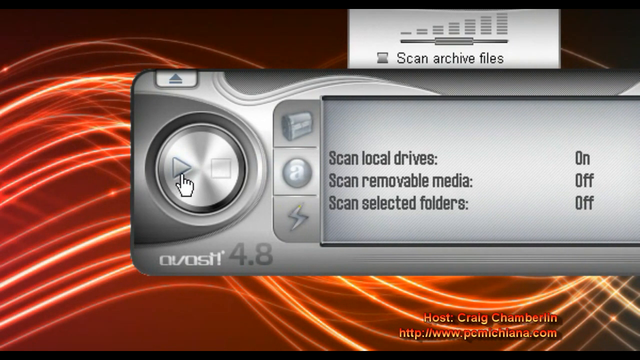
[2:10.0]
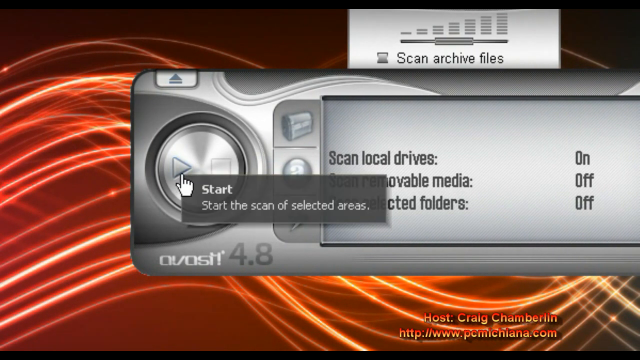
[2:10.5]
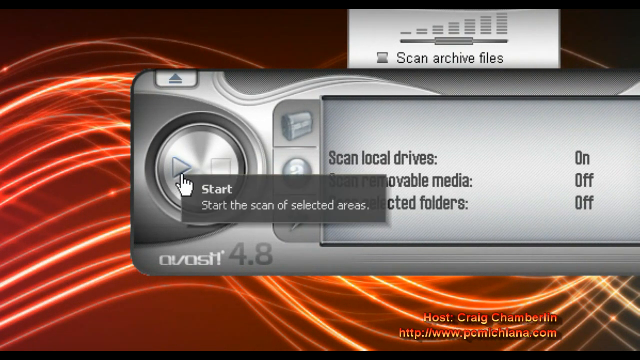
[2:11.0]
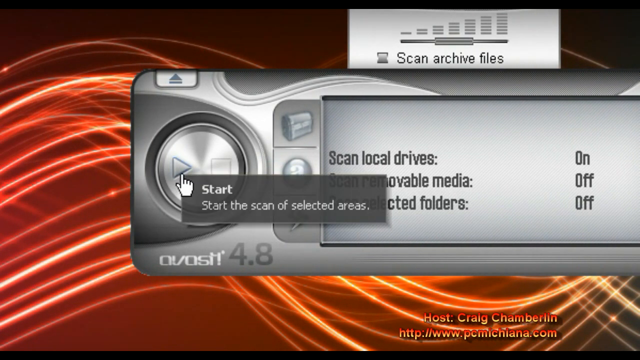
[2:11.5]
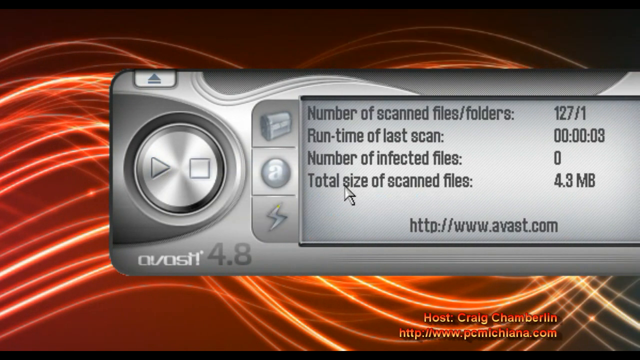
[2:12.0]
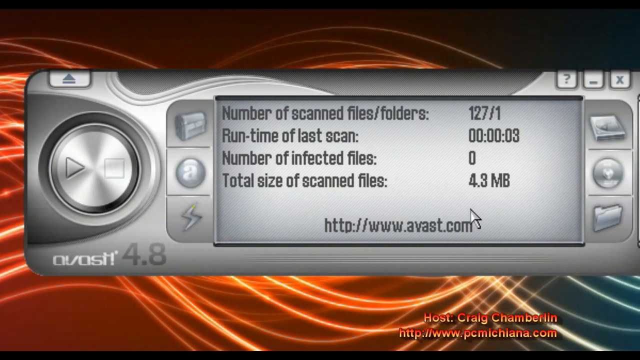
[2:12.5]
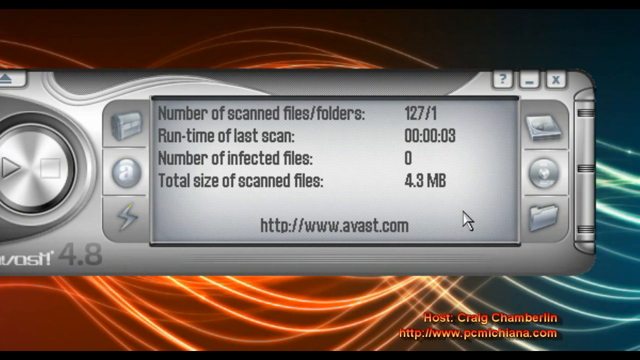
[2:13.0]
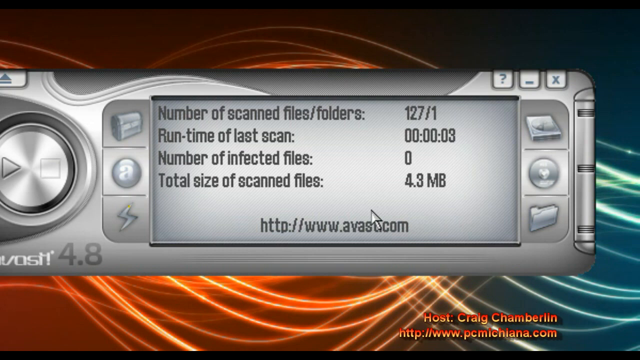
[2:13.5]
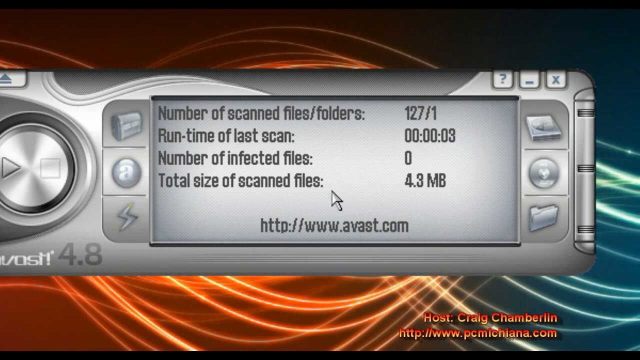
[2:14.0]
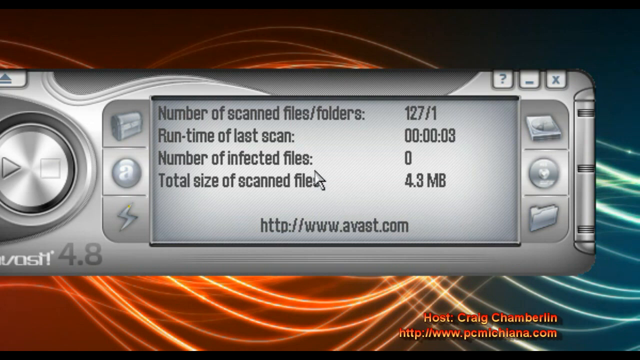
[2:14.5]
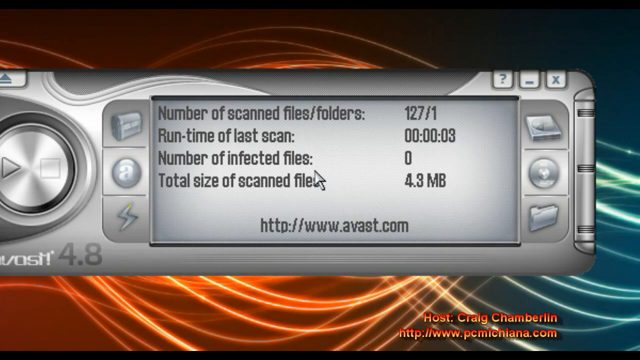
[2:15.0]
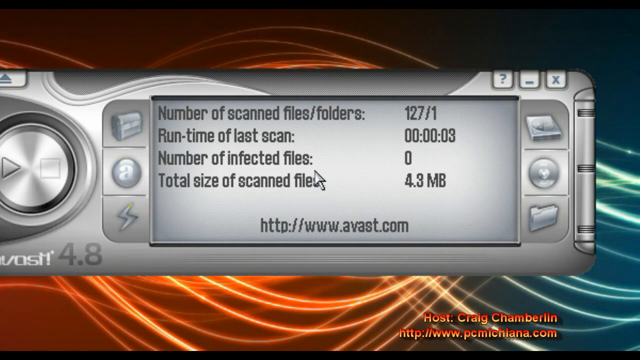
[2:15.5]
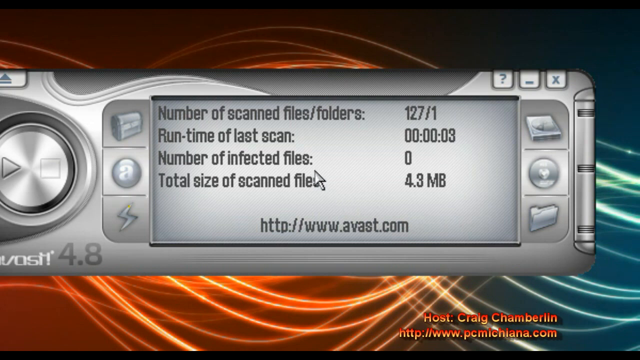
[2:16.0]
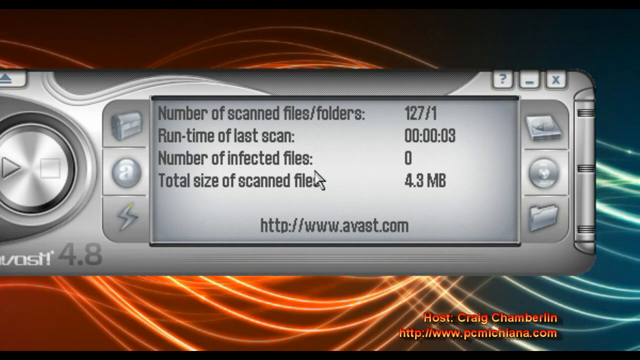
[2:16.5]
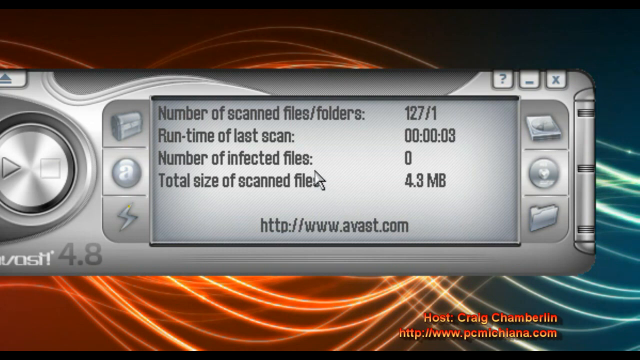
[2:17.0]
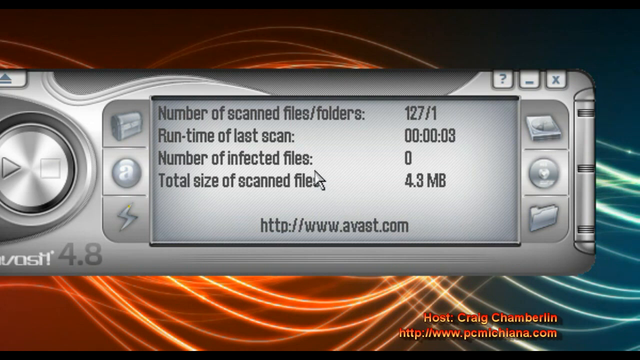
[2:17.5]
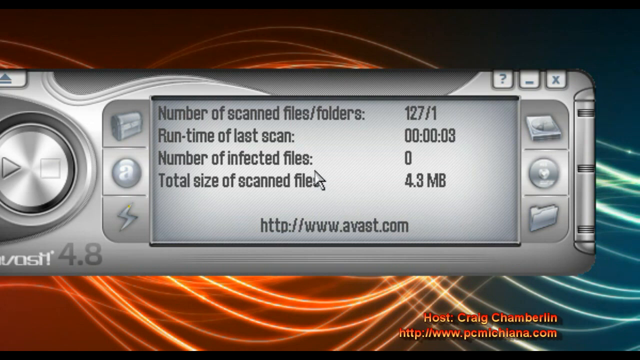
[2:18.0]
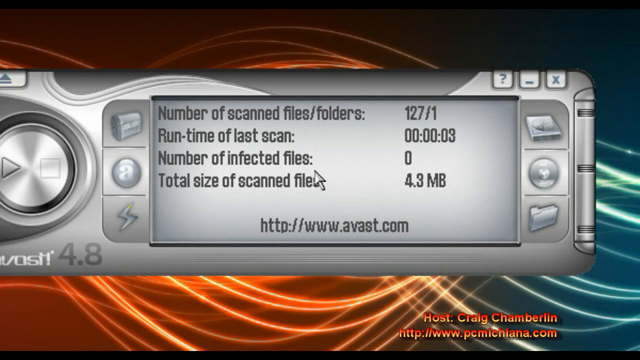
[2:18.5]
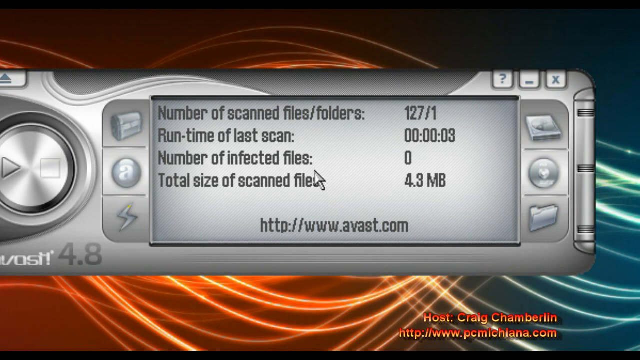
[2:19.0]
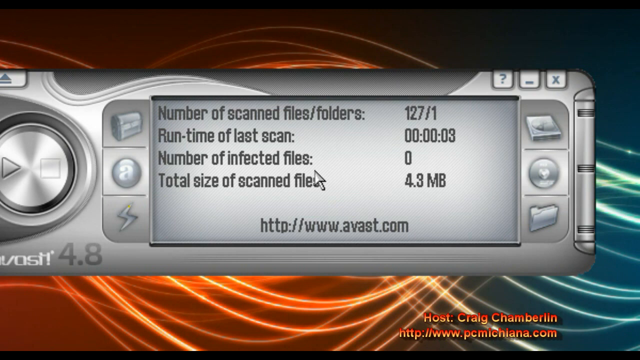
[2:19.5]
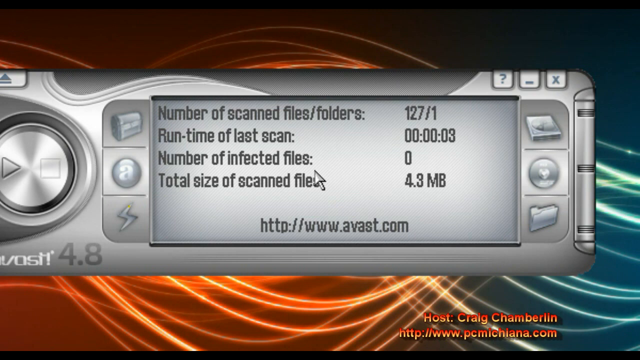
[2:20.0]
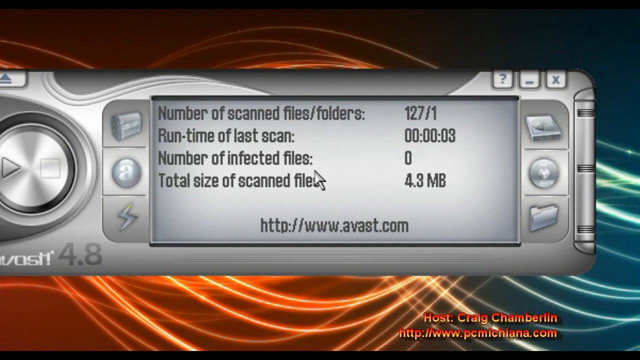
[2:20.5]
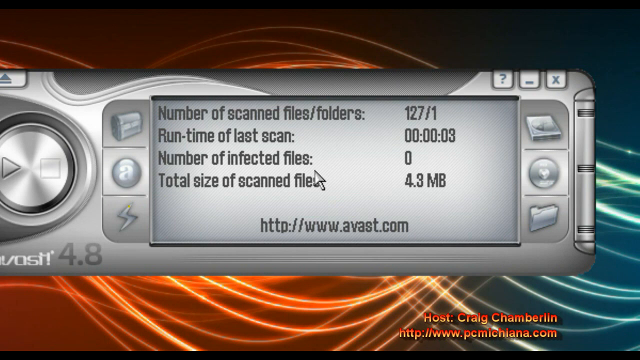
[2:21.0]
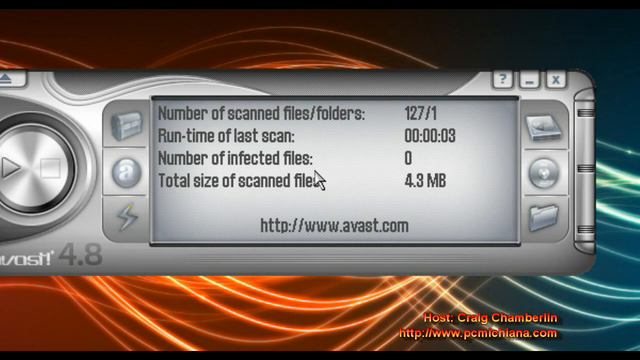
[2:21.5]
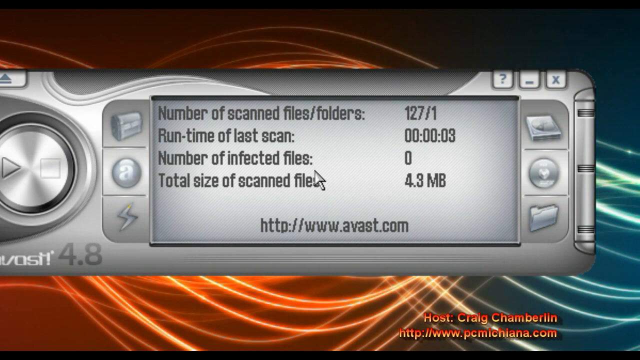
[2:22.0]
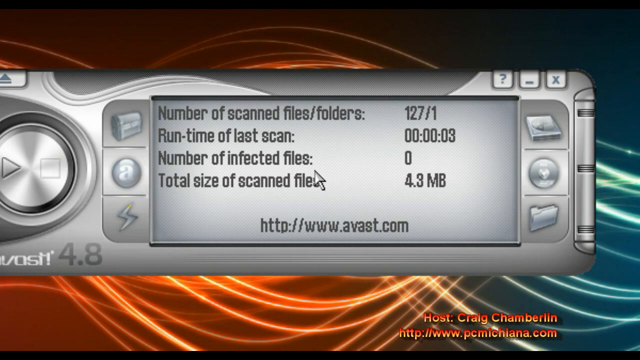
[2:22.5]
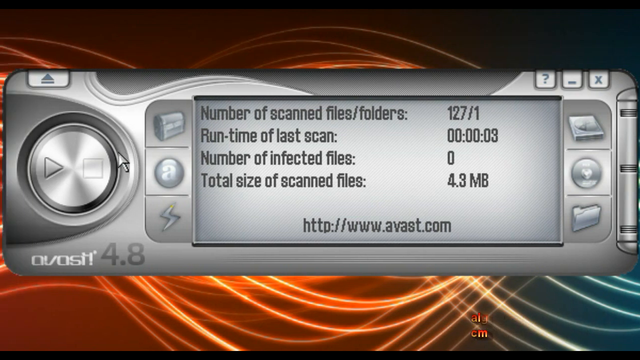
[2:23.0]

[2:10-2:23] A scan of the selected areas is running on the same grey, old-school, early-2000s-style console. Updates show the number of scanned folders as 127 out of one, the runtime of the last scan as three seconds ago, the number of files found, and a total size of scanned files of 4.3 megabytes. Just below is a link to the avast.com website. The scan is very quick, taking only seconds.